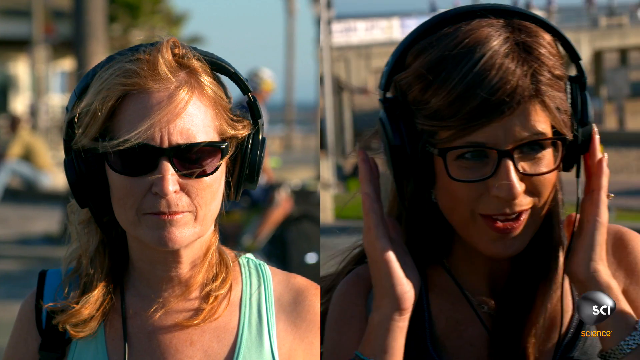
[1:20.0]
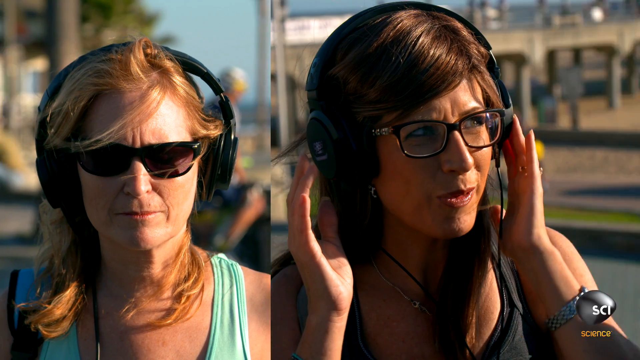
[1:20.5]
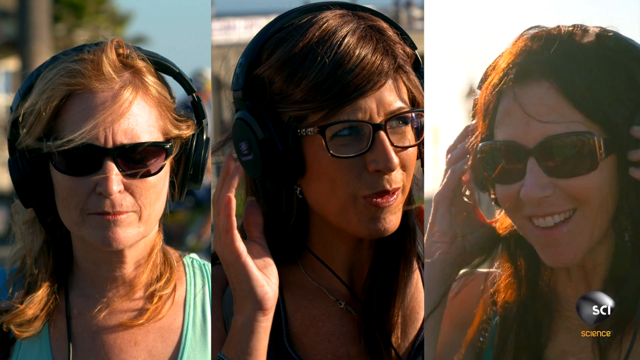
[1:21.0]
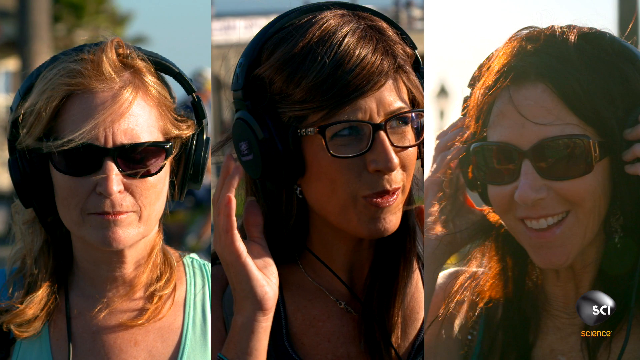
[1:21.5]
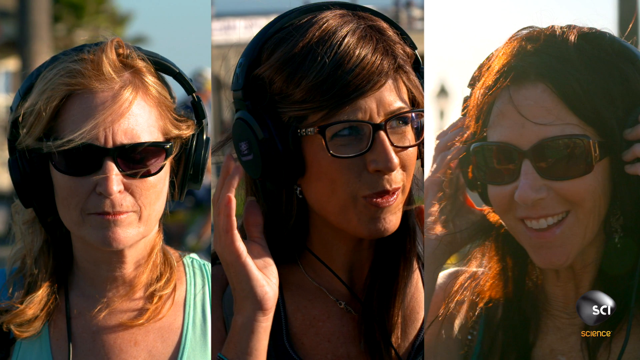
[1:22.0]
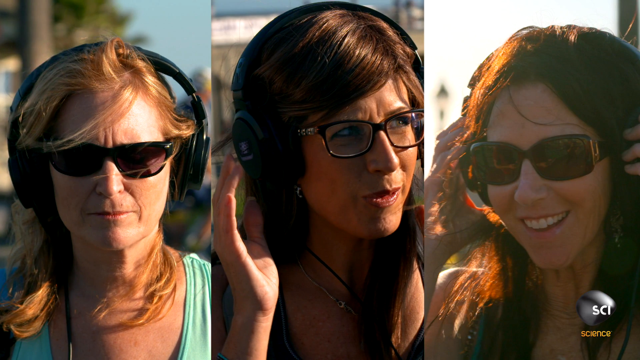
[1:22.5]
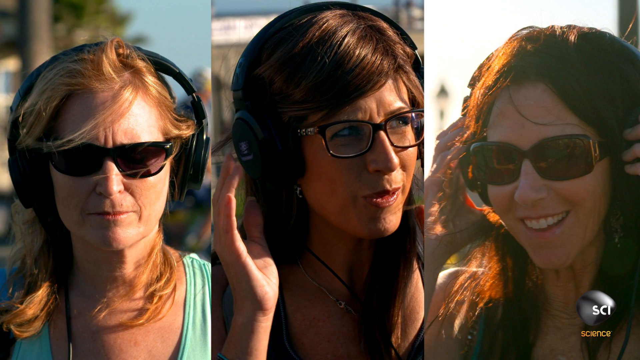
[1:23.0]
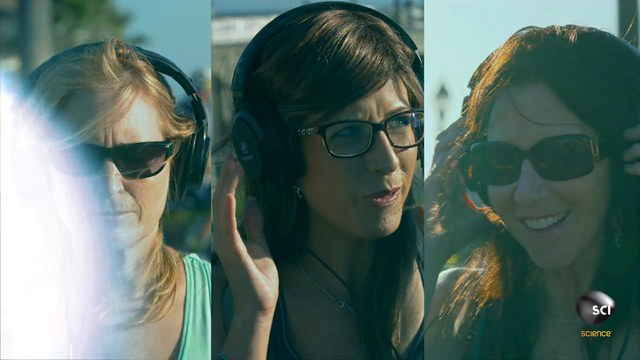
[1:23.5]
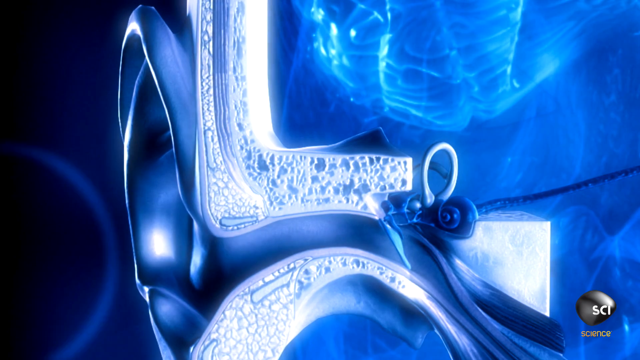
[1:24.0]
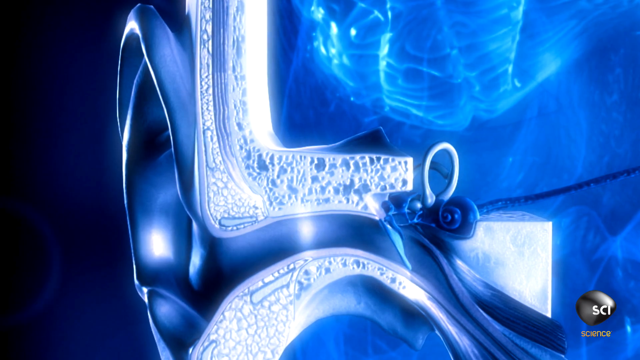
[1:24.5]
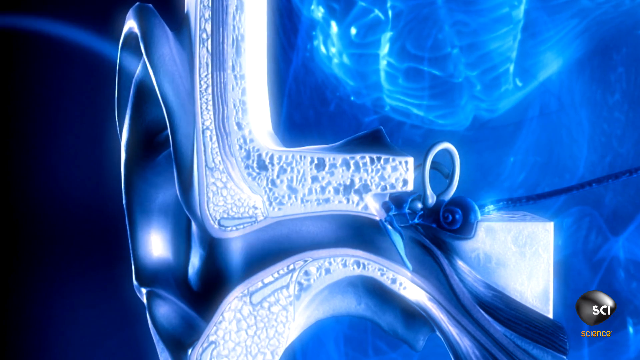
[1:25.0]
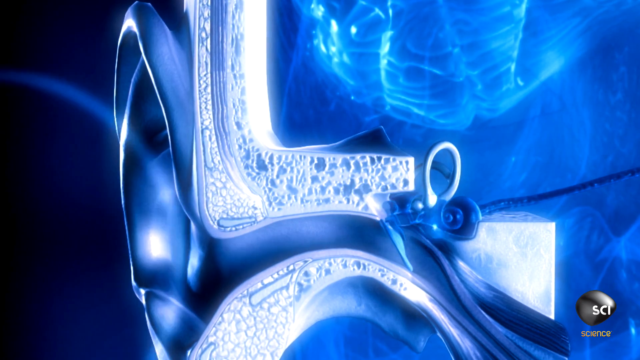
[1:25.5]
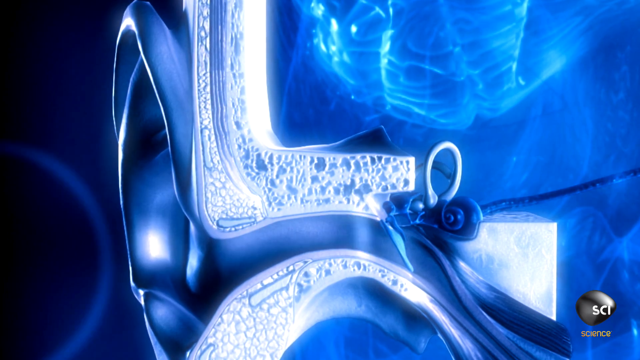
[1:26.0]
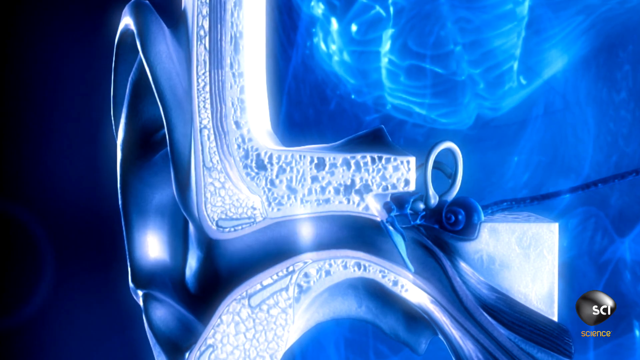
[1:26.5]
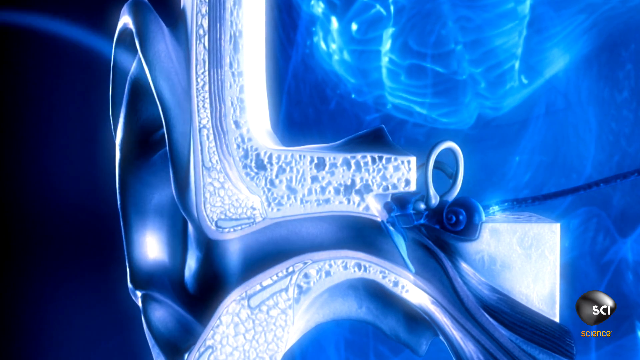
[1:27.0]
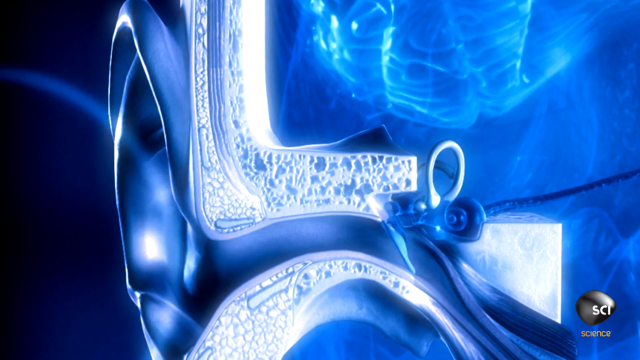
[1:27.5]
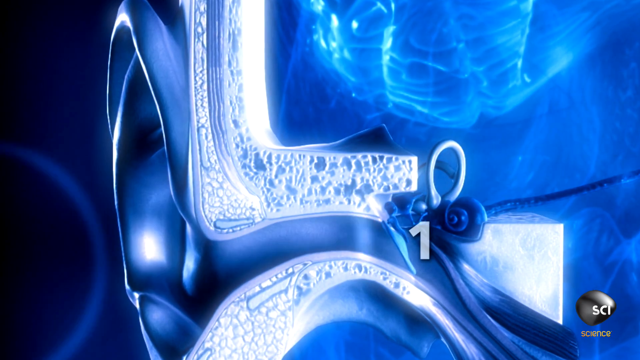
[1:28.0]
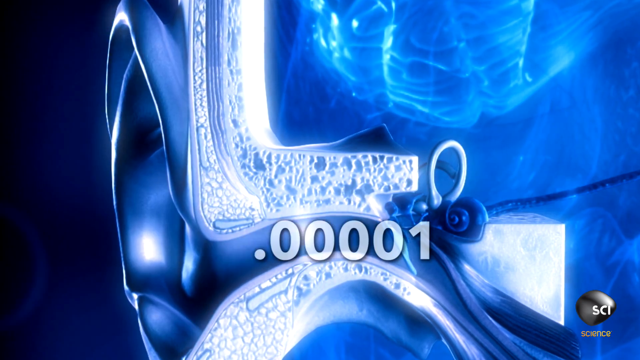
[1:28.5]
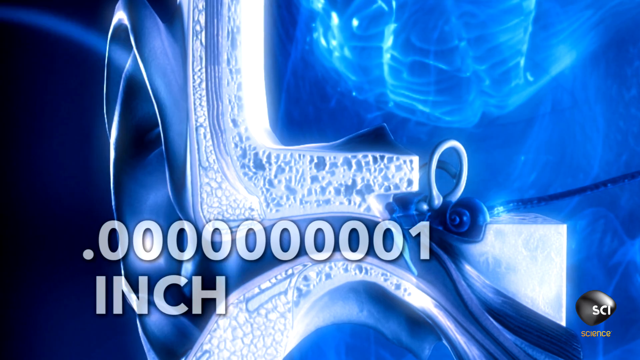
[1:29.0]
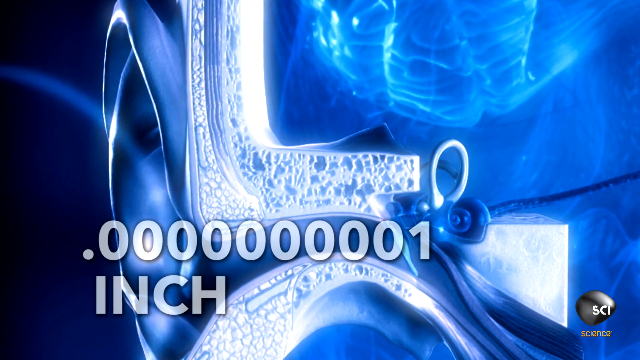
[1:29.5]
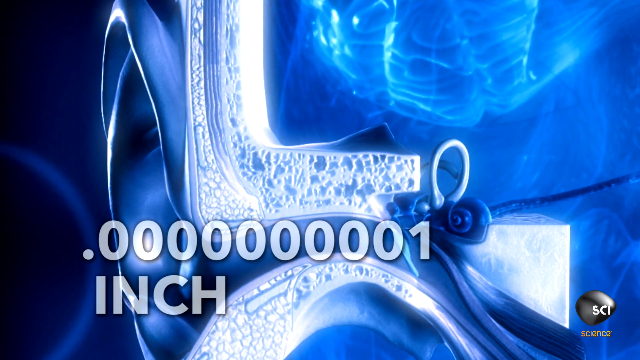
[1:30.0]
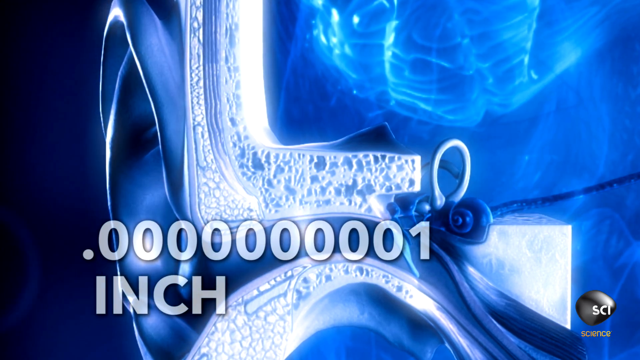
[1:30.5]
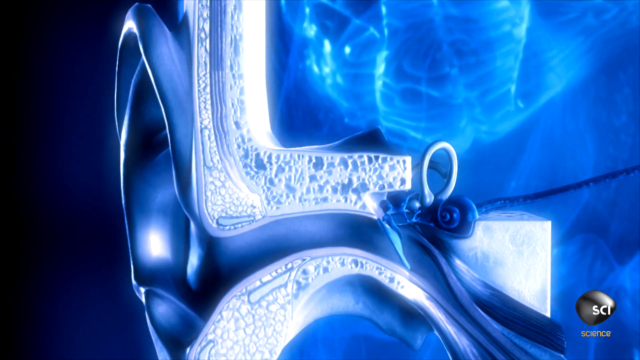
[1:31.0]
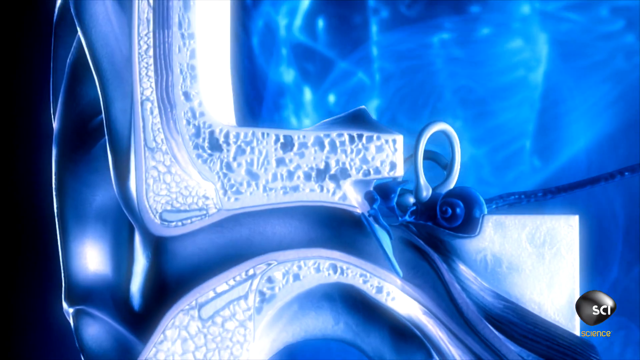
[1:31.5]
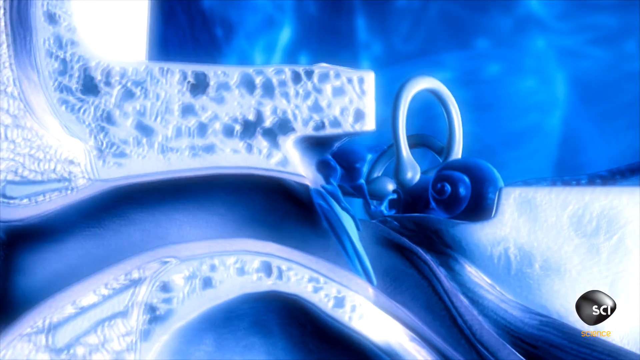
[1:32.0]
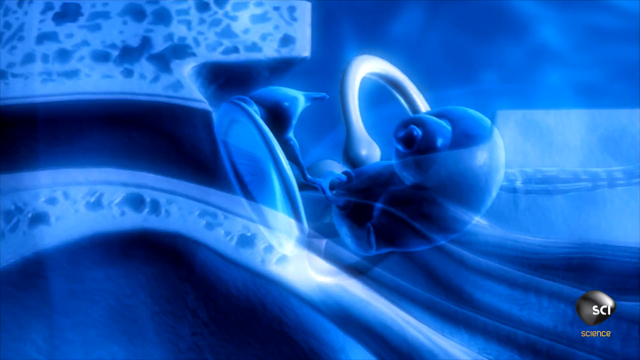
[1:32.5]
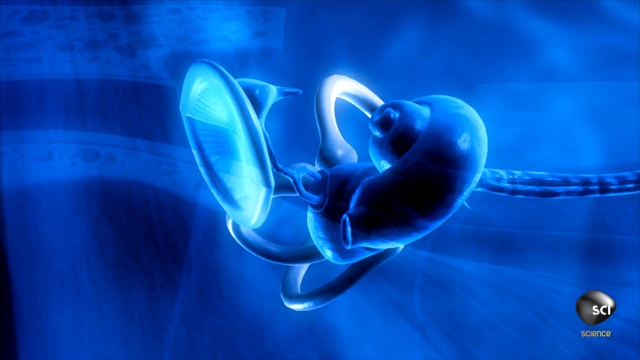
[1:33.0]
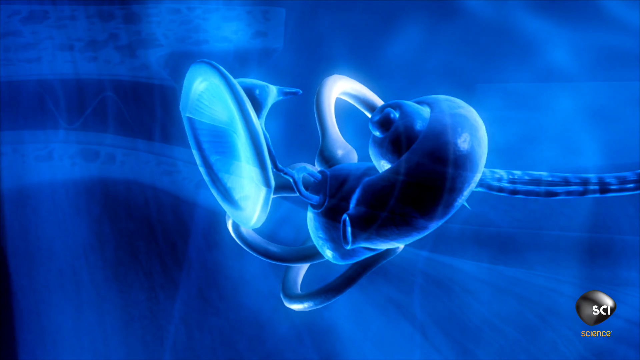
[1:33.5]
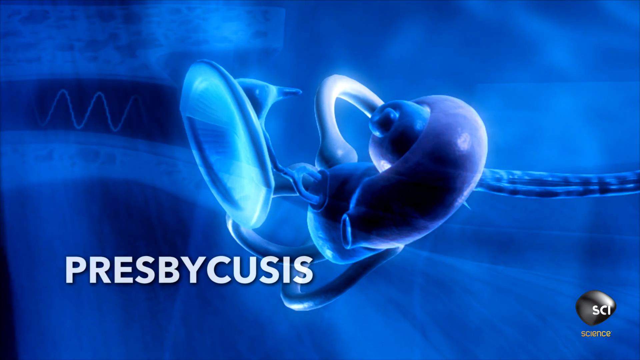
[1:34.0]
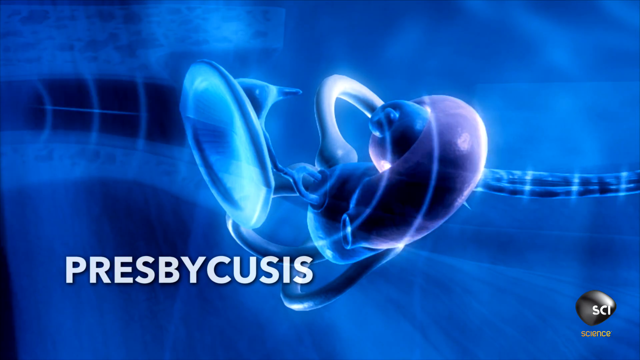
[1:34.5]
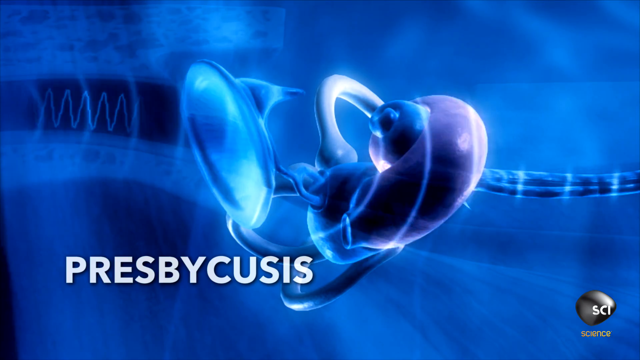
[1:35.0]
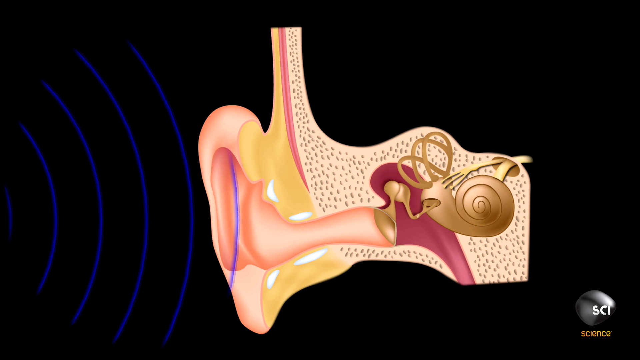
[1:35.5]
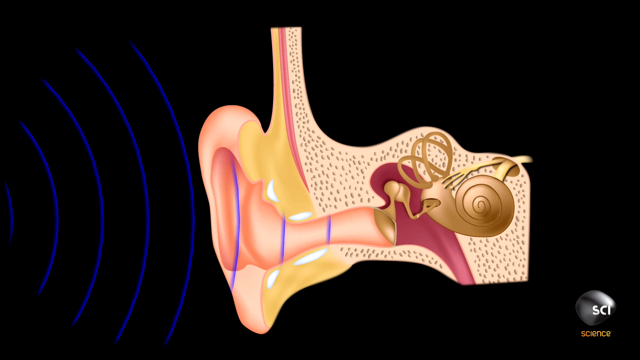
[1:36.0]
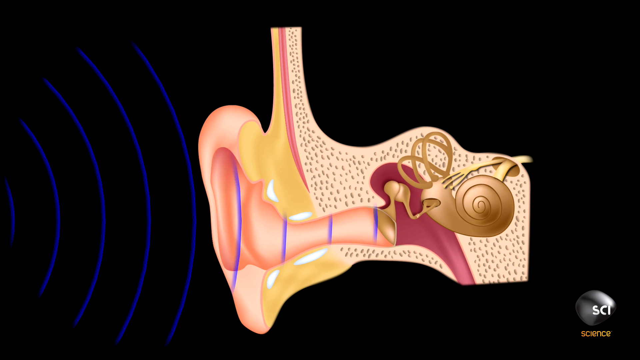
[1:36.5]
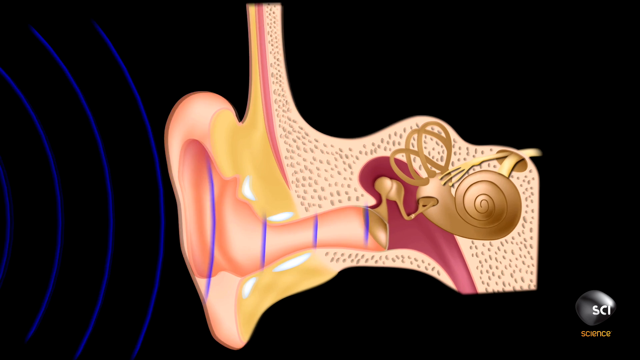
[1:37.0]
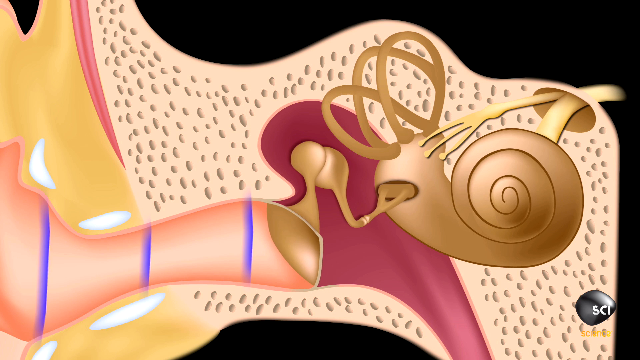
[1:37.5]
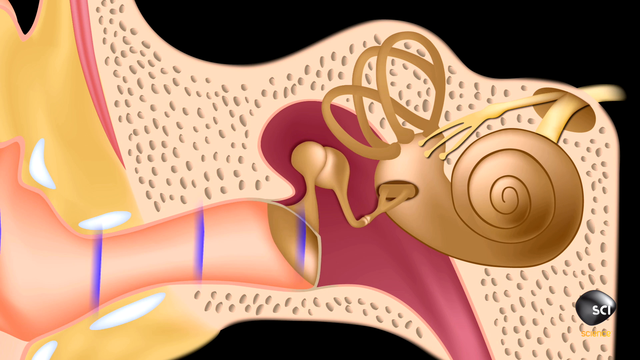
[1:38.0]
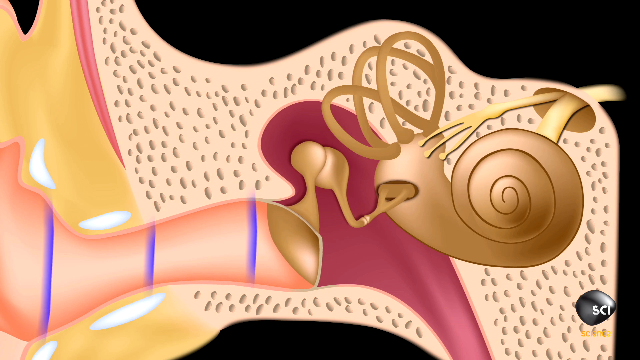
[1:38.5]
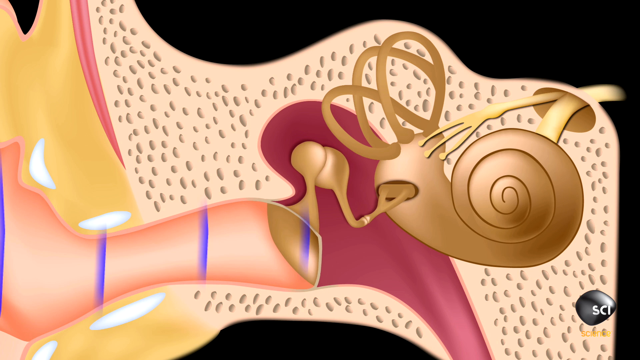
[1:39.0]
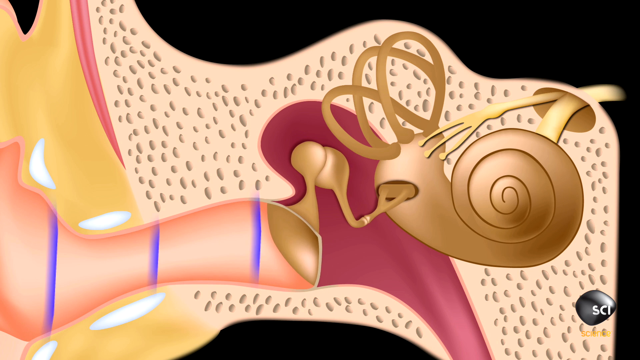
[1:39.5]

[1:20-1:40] A three-way split screen shows three different women. The screen then changes to a blue background with the text "0.0001 inches," and the video switches from live action to graphics of what looks like the inner ear and eardrum. Graphics of sound waves move in, and the view zooms into the eardrum. The word "presbycusis" appears, and the graphics turn colorful, tan and red instead of blue and gray, with the eardrum sort of vibrating with the sound wave.